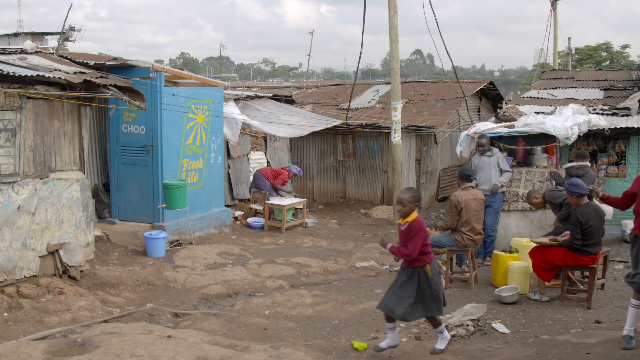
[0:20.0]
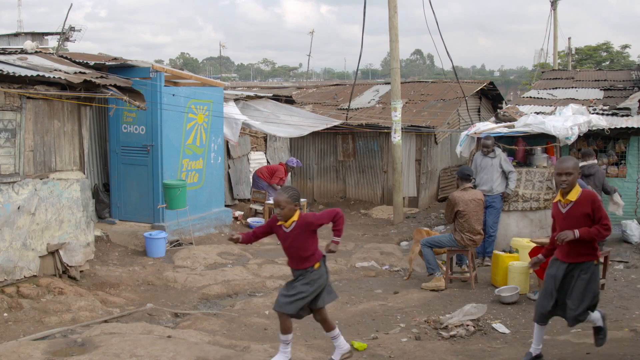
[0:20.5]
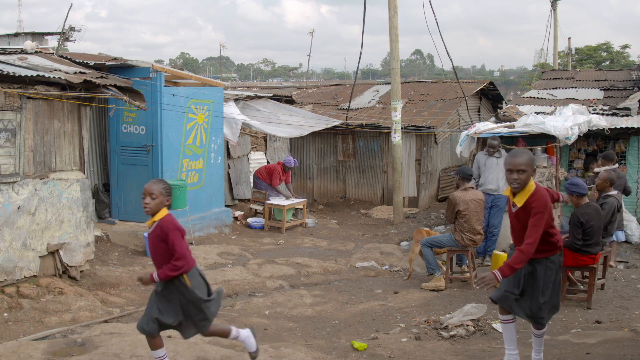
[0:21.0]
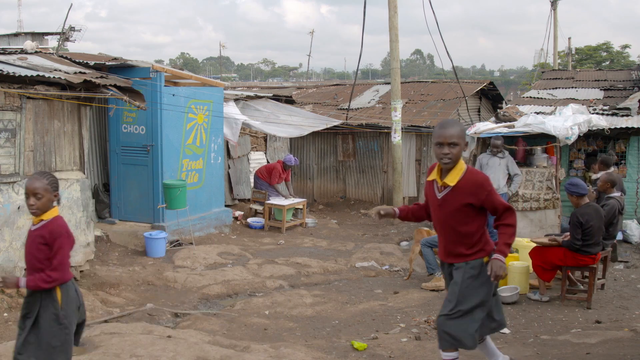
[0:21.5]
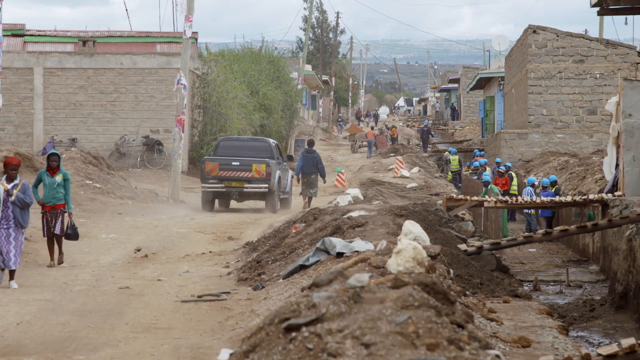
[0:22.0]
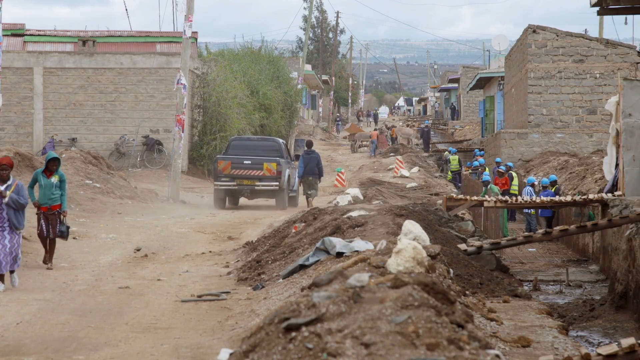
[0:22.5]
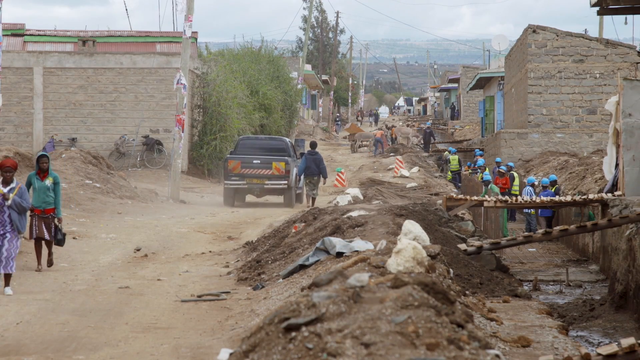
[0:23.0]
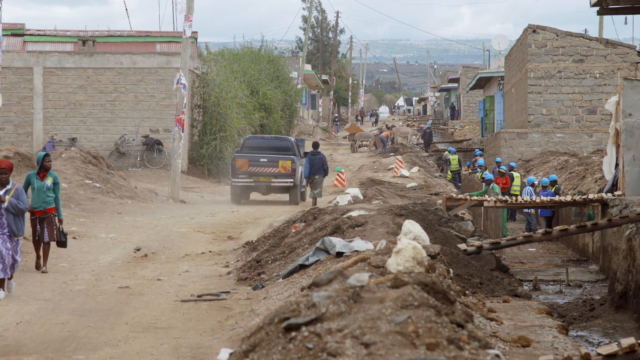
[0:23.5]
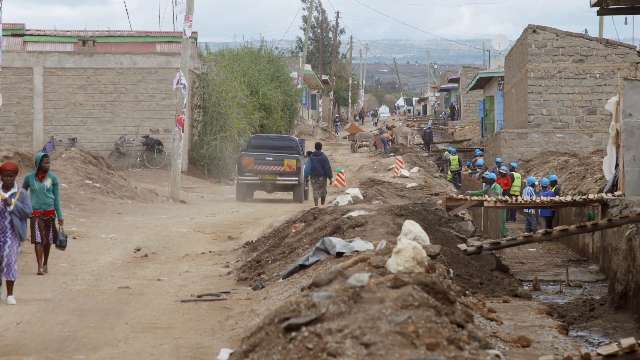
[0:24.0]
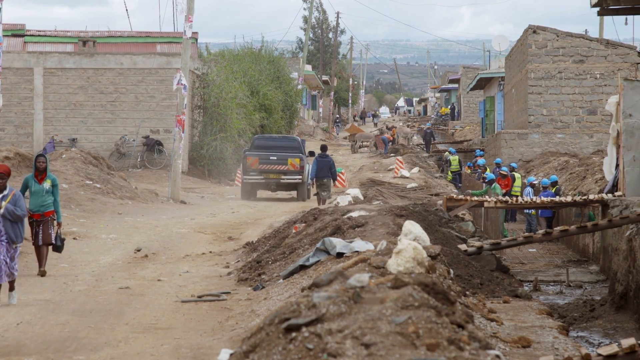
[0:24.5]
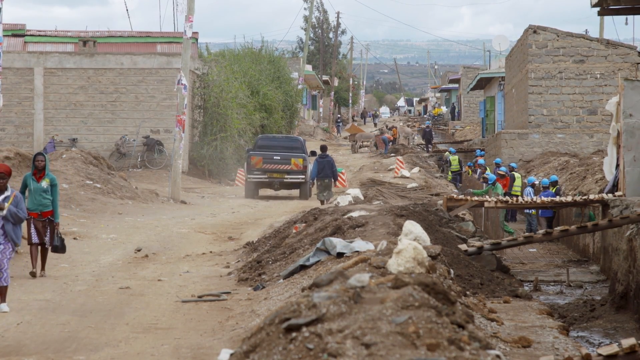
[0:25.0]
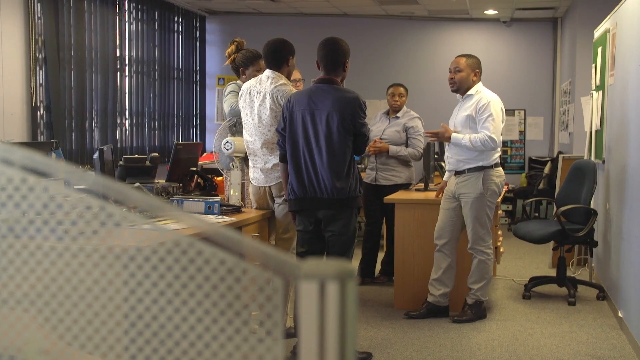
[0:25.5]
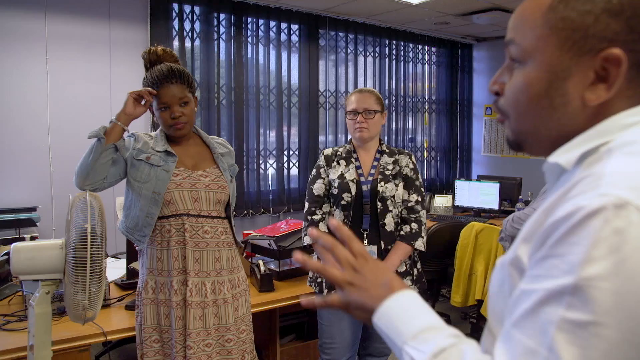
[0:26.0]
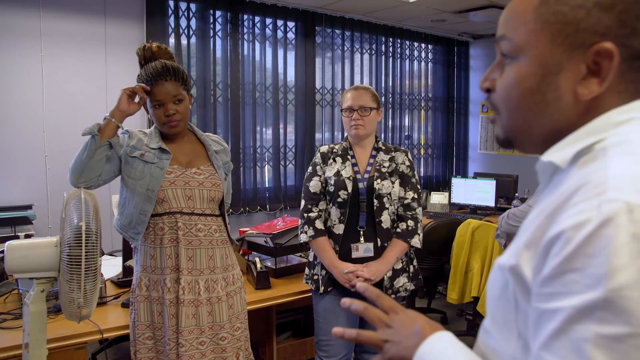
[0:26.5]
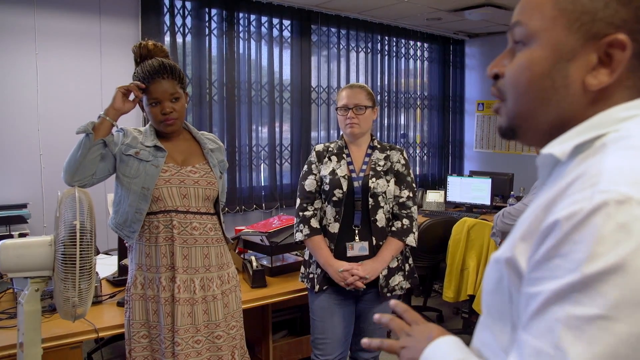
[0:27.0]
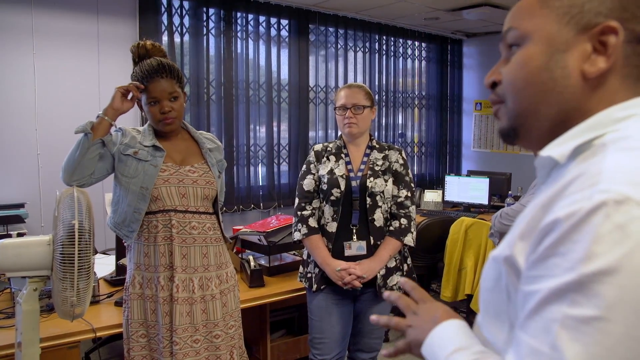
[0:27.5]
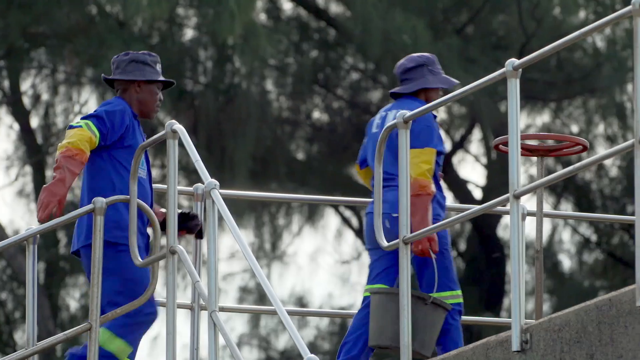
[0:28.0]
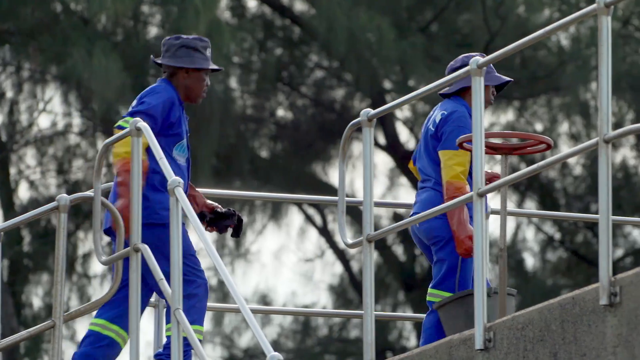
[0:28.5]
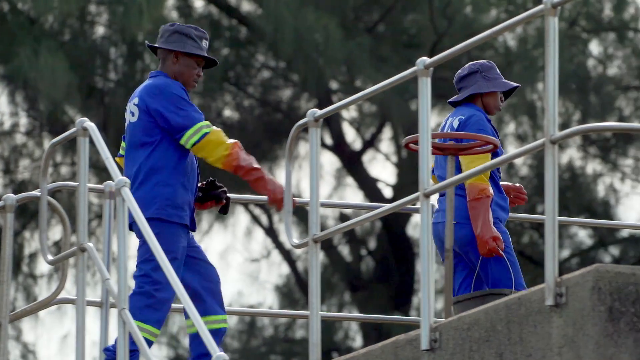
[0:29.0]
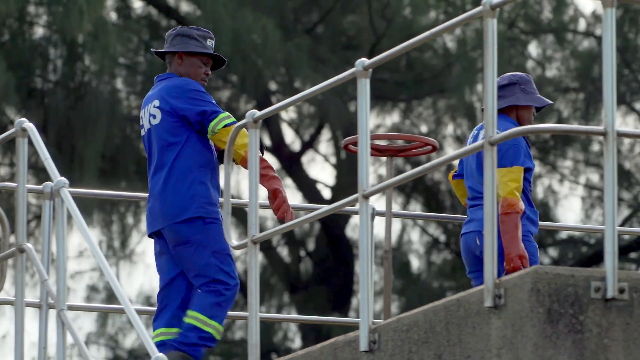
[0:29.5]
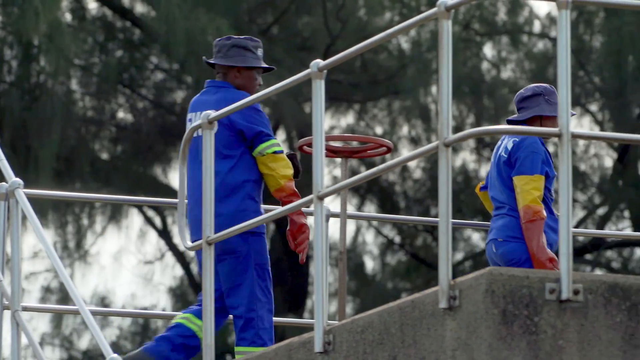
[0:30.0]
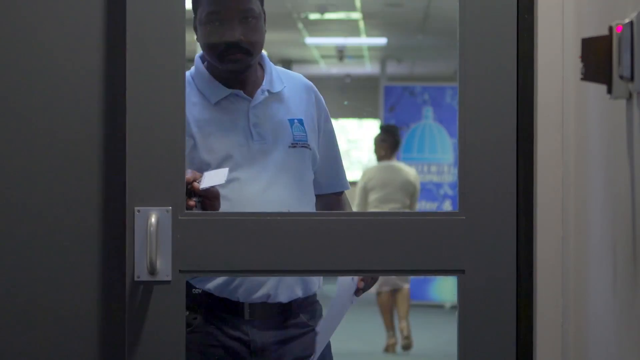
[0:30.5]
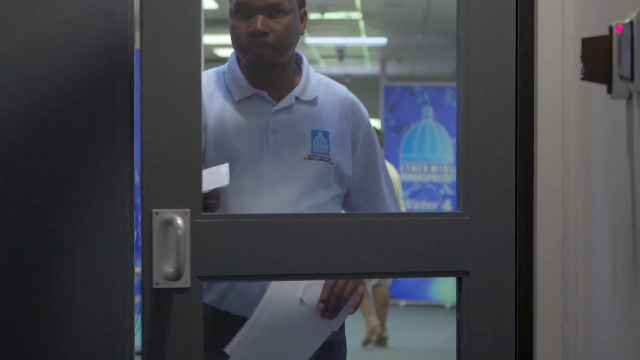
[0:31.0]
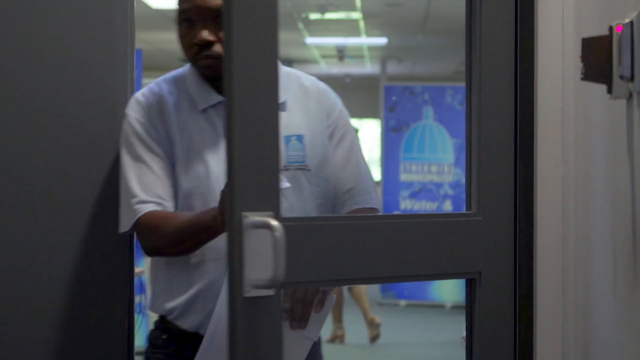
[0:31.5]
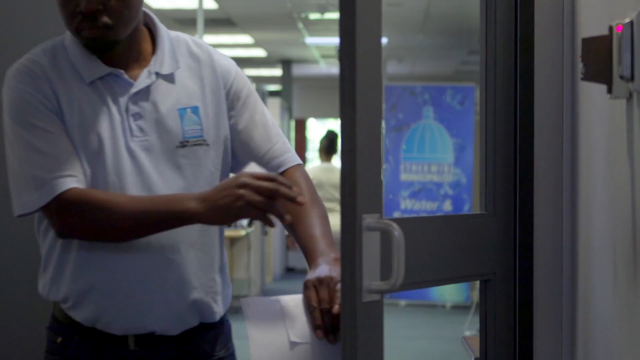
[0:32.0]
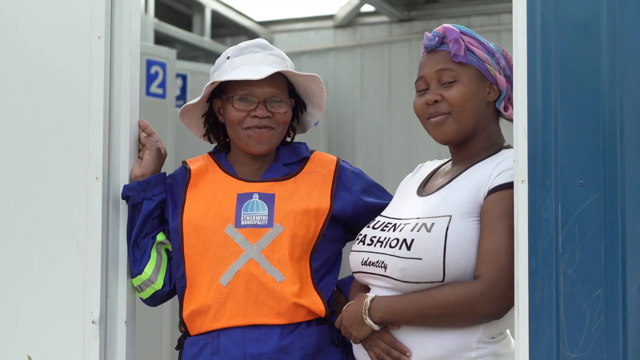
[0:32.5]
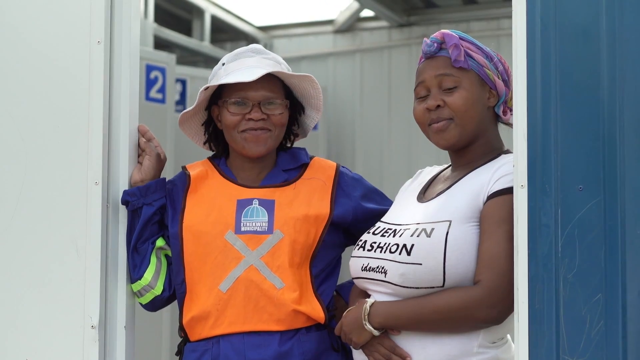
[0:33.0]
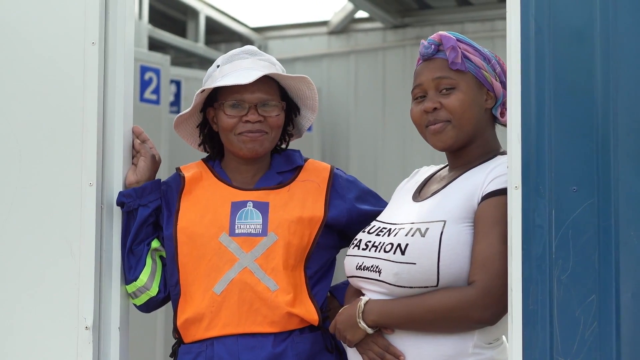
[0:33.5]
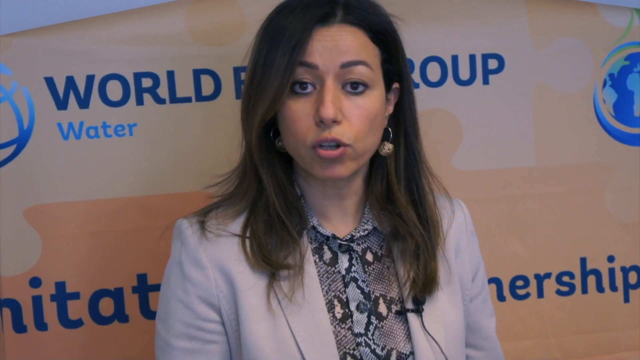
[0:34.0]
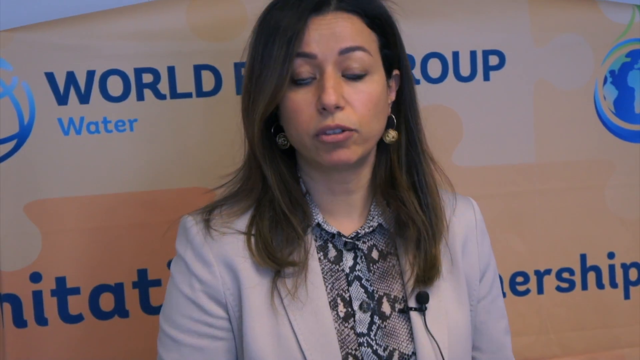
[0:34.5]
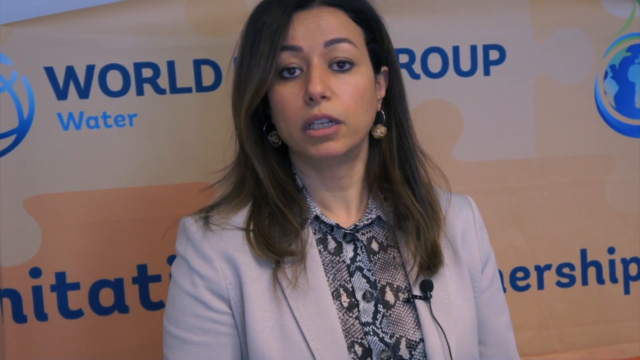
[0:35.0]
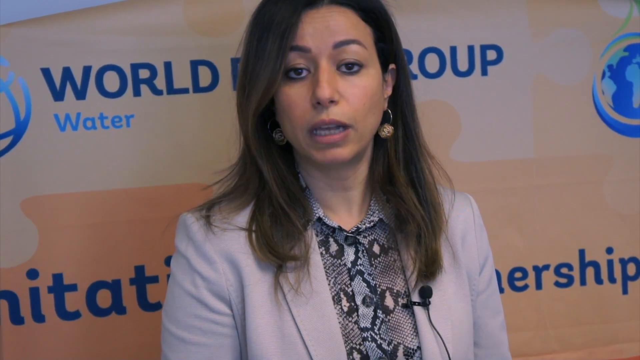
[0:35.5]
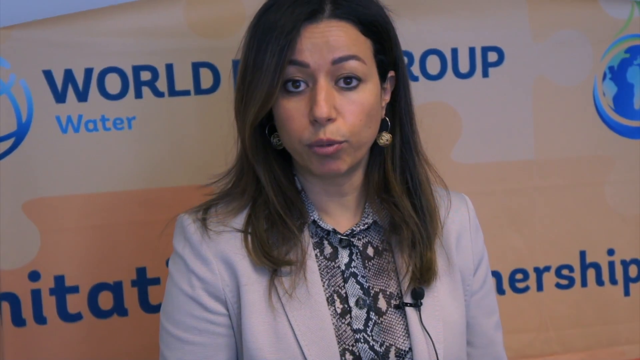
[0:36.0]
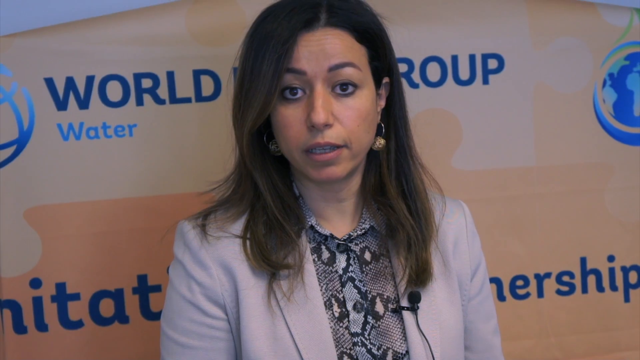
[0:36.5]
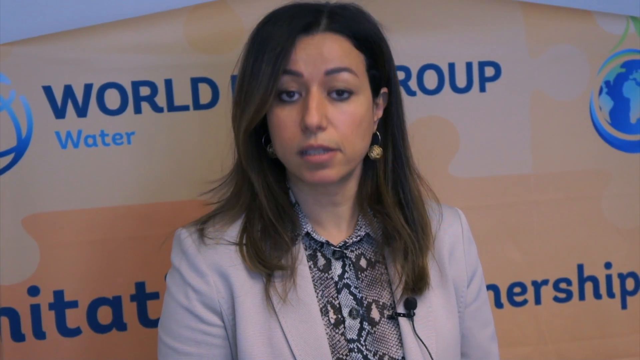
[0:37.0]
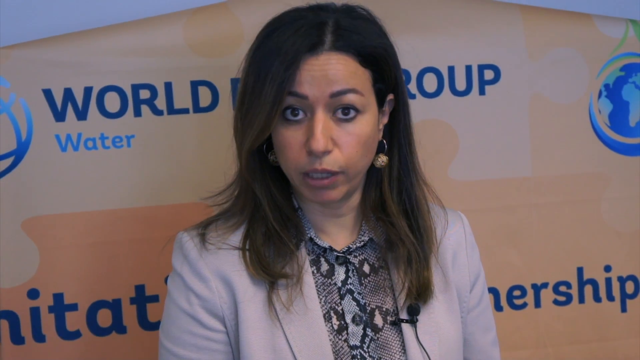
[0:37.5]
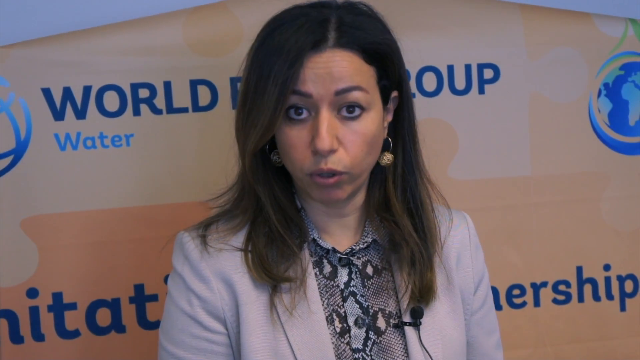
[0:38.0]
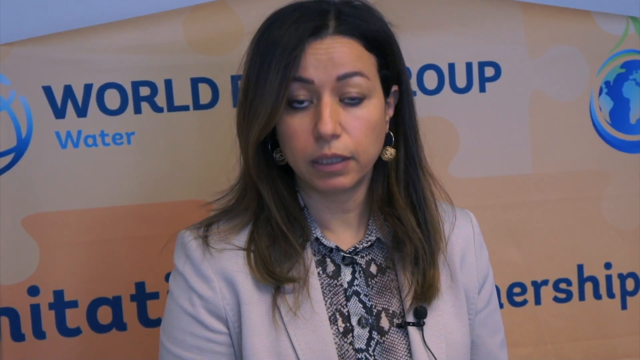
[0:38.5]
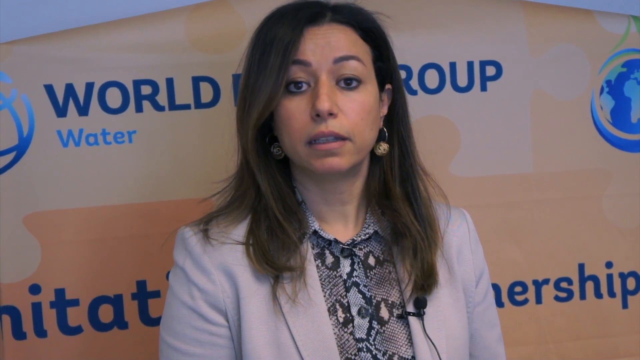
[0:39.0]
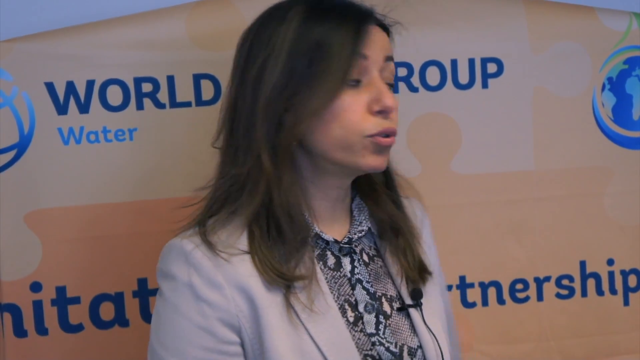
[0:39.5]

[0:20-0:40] More people are shown in the area, and a closer shot shows the makeshift homes, which appear to be made of various materials including metal, wood and possibly slate. The children in the shot wear the same burgundy jumpers with yellow collared shirts underneath and grey trousers, which looks like a school uniform. Another shot shows a weather-damaged area to the right that has created a drop in the path, and men wearing high-vis vests appear to be working on it. People holding bags walk past the work area, and a car goes past as well. The scene then moves to an office, where people stand around talking. One woman wears a lanyard, and various shots within the office show people walking through doors. Two women stand together smiling at the camera; one of them wears a luminous orange vest over her shirt. Ayat Soliman returns, continuing her interview to the camera and pointing to the banner behind her as she does so.